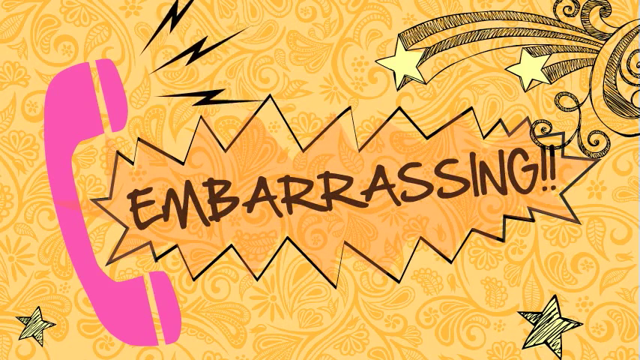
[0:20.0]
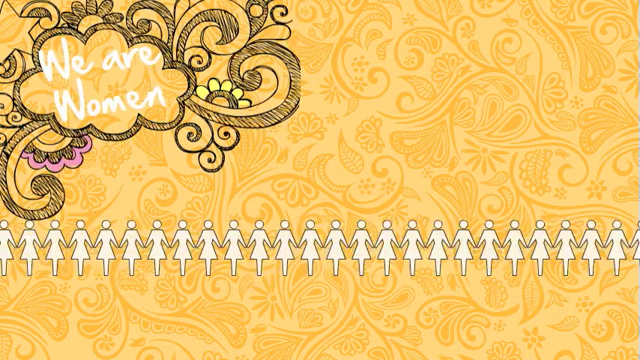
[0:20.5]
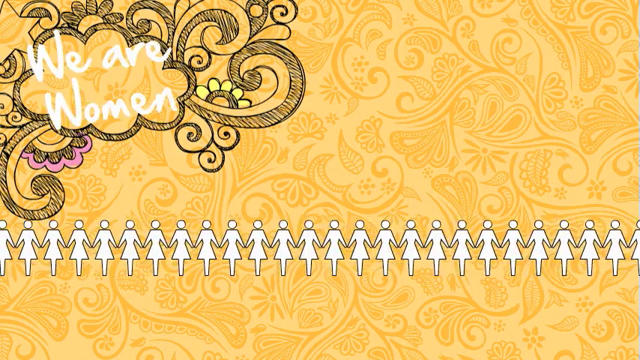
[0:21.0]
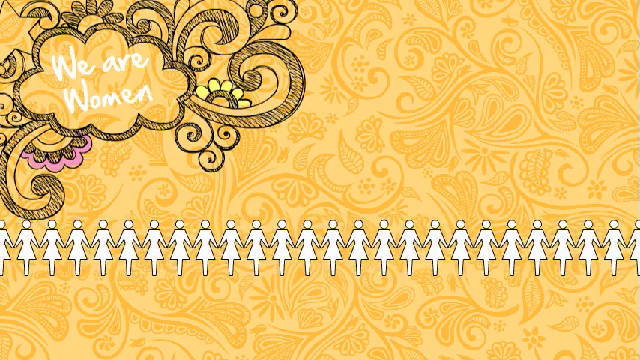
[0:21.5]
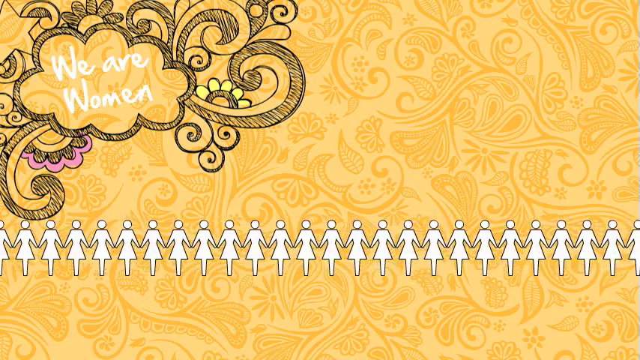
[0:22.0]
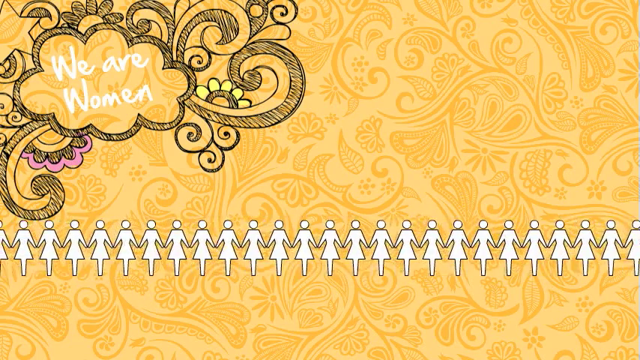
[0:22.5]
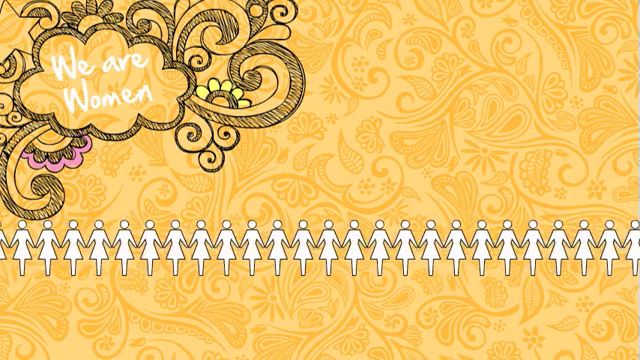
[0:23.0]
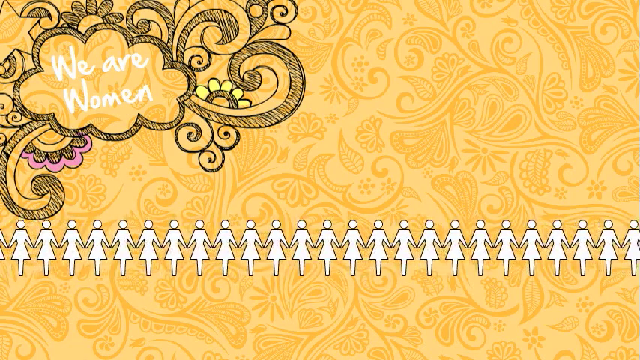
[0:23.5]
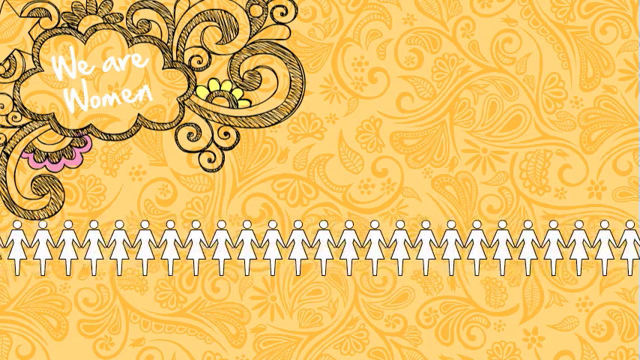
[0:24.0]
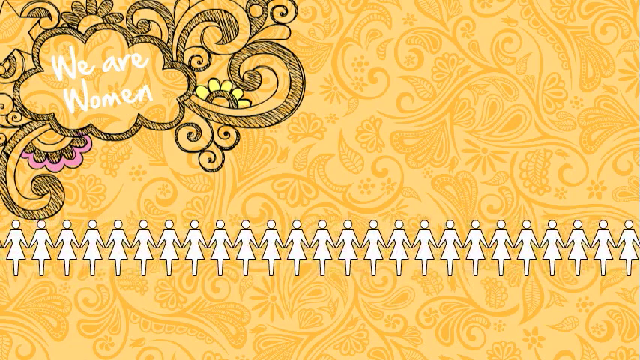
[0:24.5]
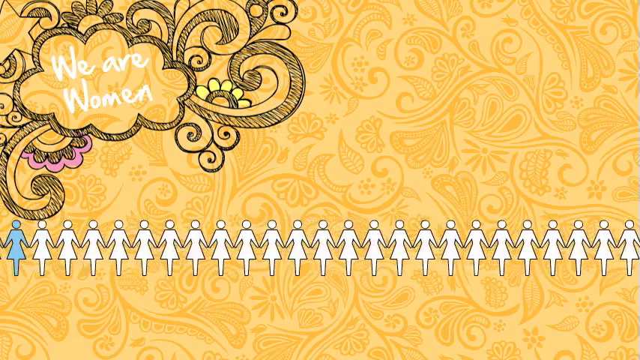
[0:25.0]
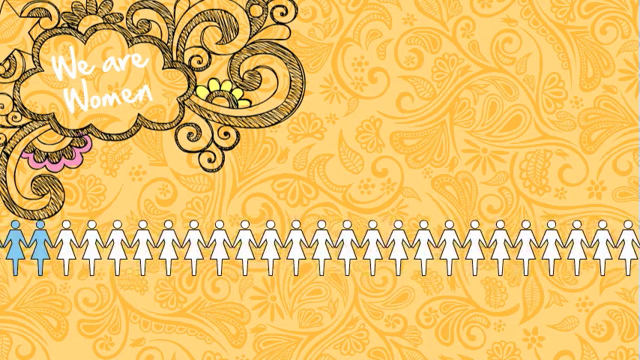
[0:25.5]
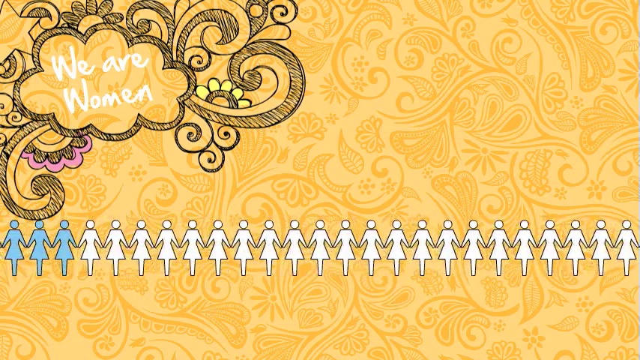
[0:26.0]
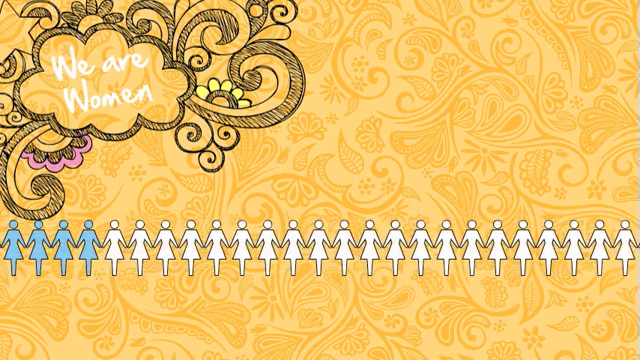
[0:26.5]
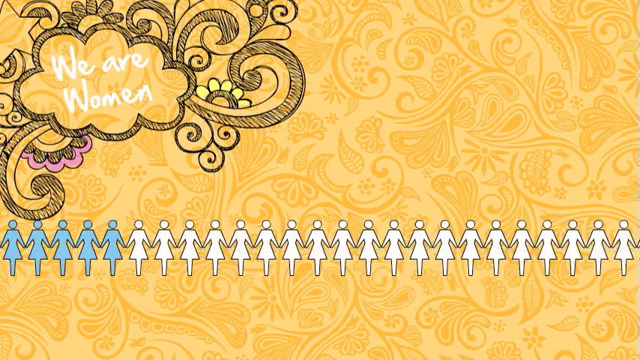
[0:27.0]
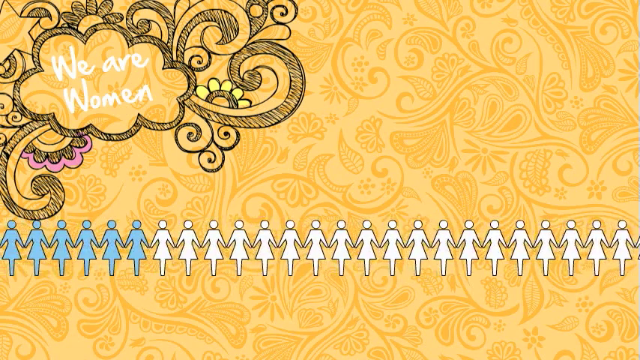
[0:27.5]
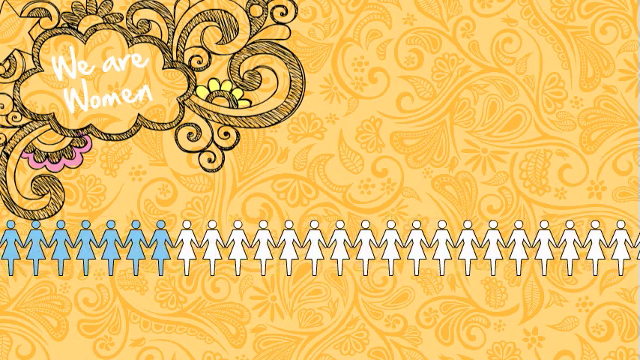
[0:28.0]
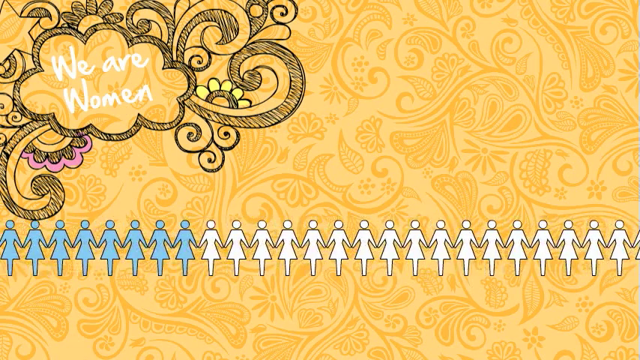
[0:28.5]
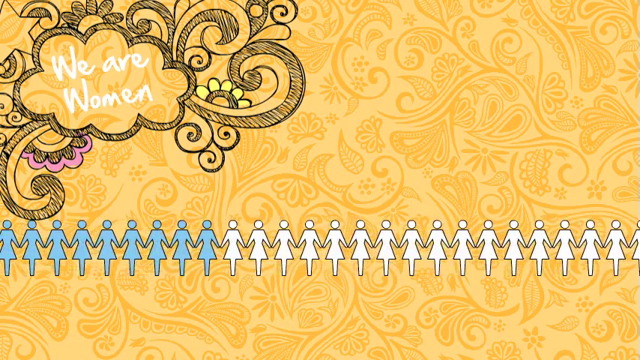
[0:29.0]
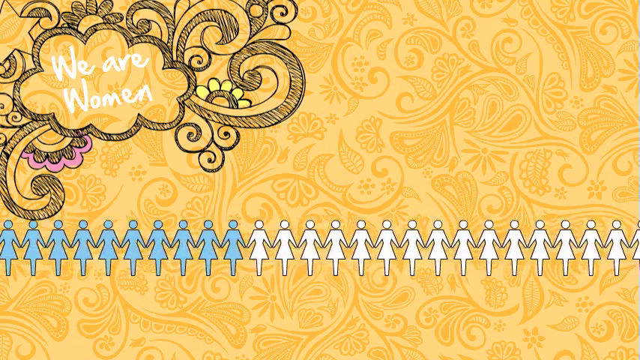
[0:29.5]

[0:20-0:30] A pink phone receiver is on the left side of the screen, with three black lightning bolts coming out of the earpiece. In the bottom left there is a heart that is sort of white on the inside, drawn with black lines. In the center is a spiky banner containing the word "embarrassing", and stars are on the right side of the screen. This disappears, and sort of a floral pattern appears in the top left with sort of a cloud in its center; in the cloud, white letters read "we are women". Then a row of animated drawings of women appears; they sort of look cut out of paper and are holding hands. They kind of look like the symbol on a women's bathroom, but with legs. The symbols start turning blue, and the blue symbols move from the left side of the screen to the right.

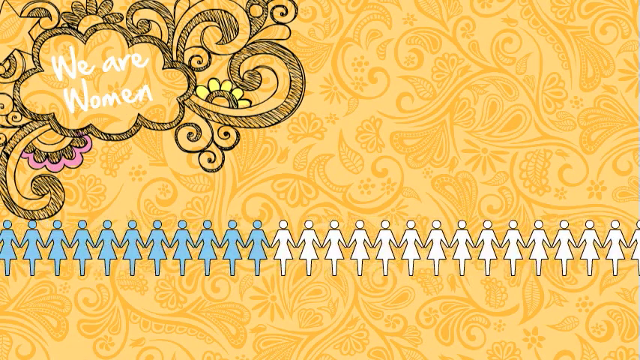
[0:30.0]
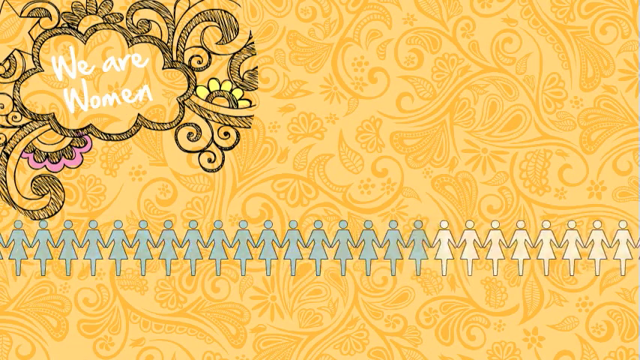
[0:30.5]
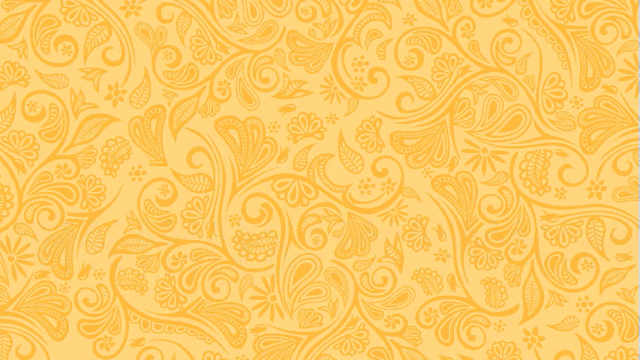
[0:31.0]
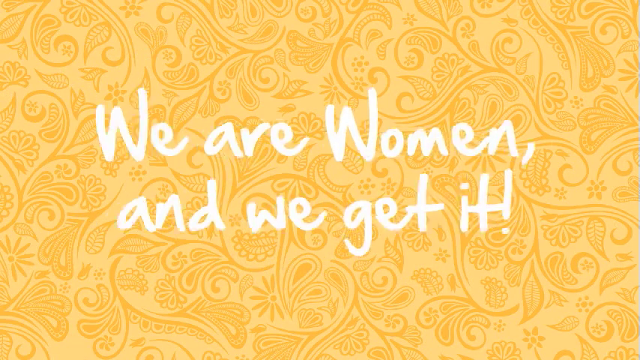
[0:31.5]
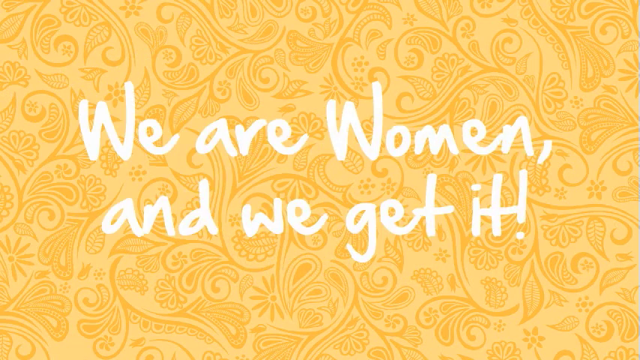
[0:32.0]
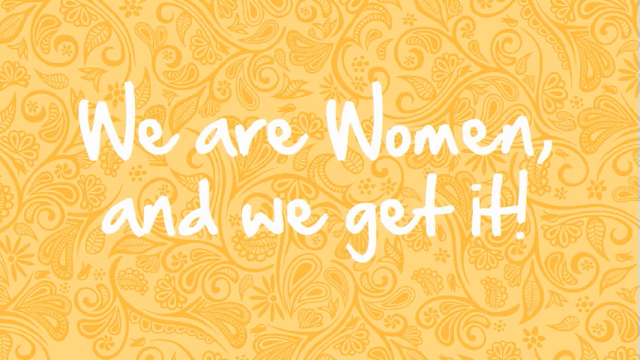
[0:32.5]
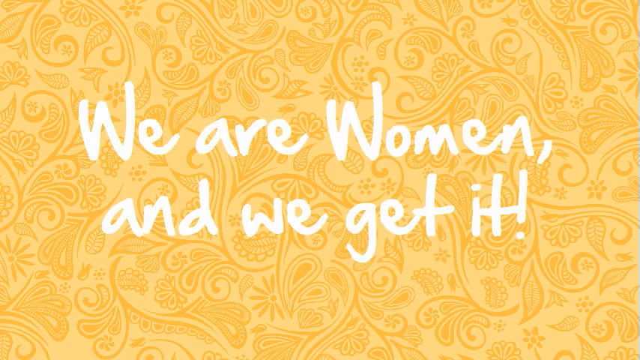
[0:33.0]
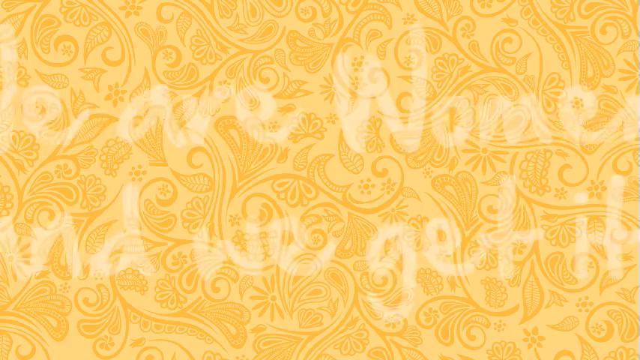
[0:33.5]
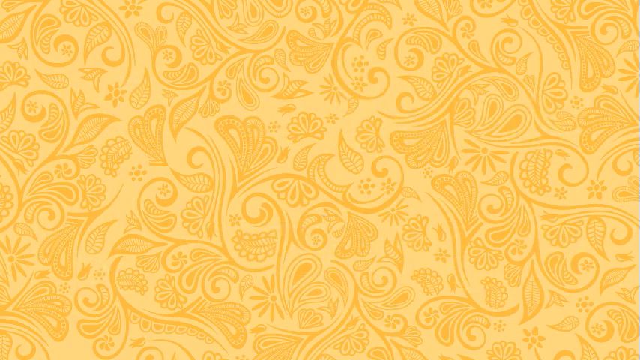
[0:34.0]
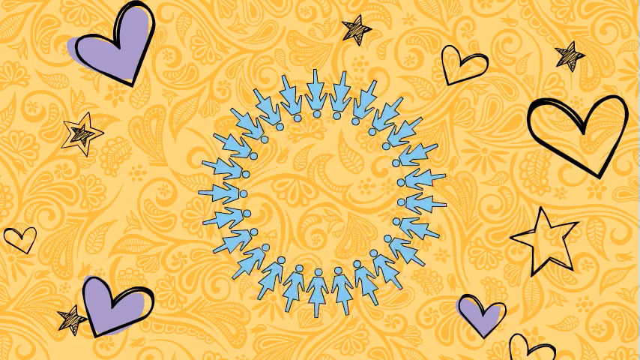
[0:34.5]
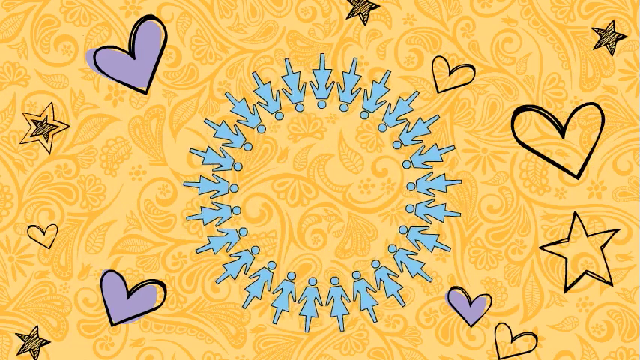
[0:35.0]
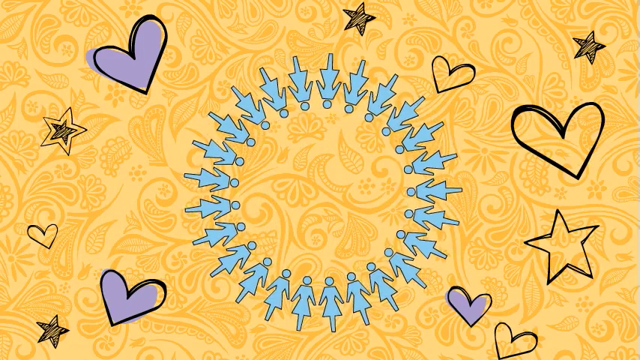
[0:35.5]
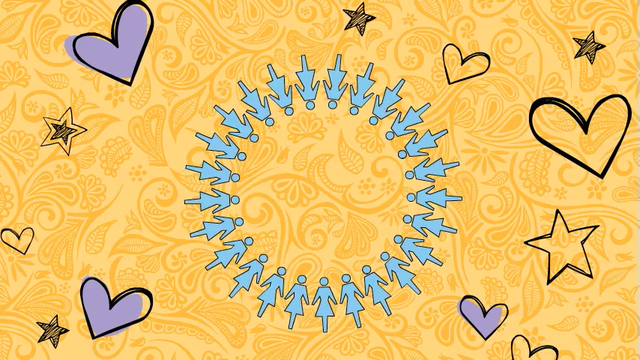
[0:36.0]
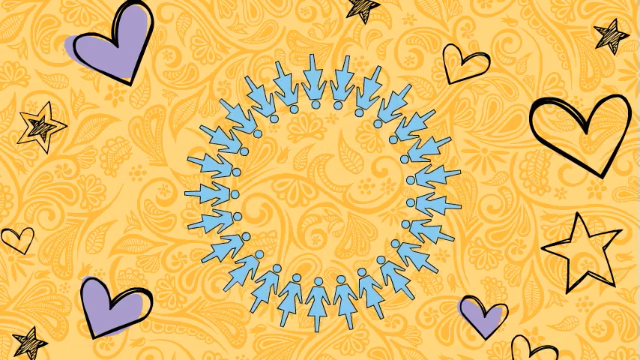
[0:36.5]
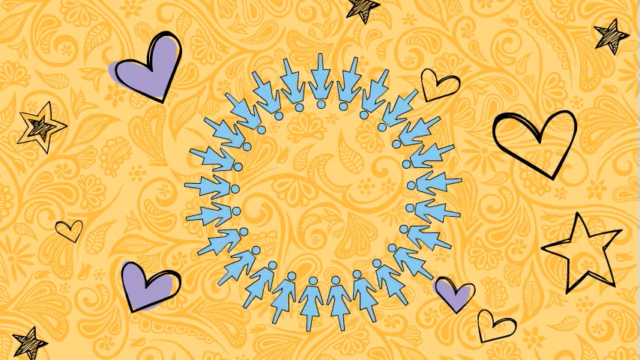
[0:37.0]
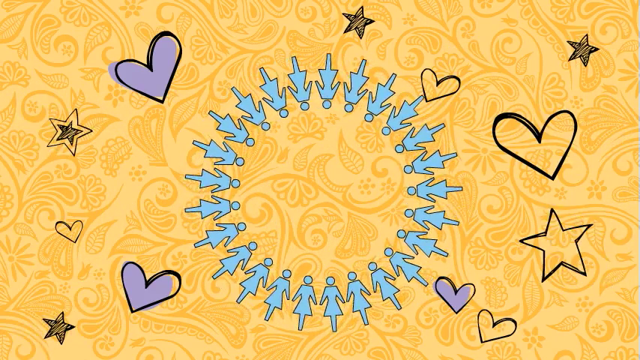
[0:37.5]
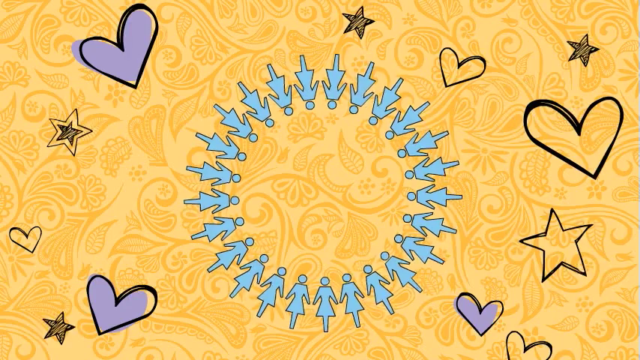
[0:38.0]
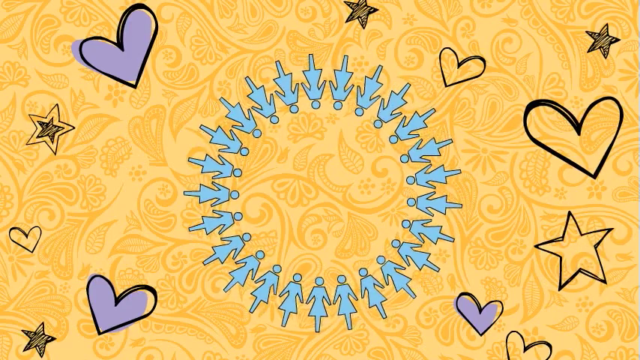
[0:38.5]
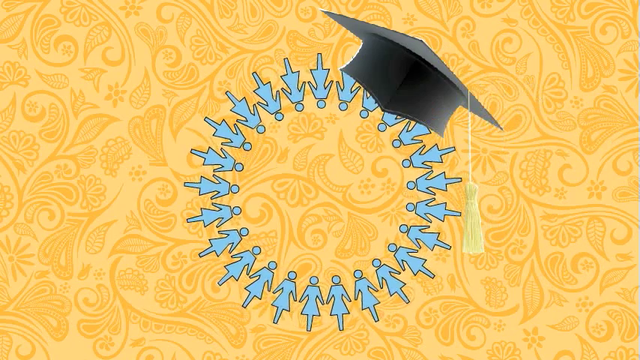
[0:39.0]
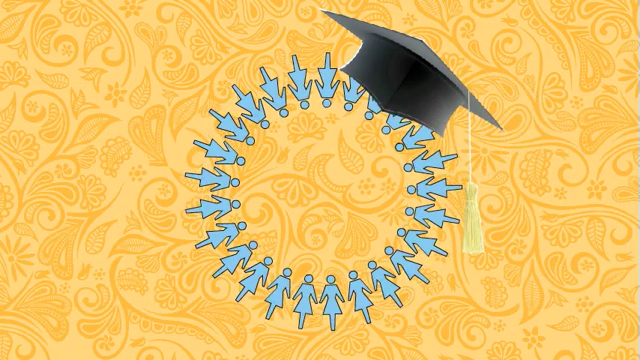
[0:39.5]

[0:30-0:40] The screen has a yellow-black background with darker yellow colors forming a pattern, sort of like vines with leaves and flowers. In the top left there is more of this pattern with a cloud in the middle, all sort of dark, as if drawn in dark pencil or something. In the cloud, white letters read "we are women". Around the bottom middle of the screen, a number of animated drawings of women symbols, like the symbols on a women's bathroom, move from the left side of the screen to the right. They disappear, and white letters on the screen read "we are women and we got it". Purple hearts appear on the left and right sides of the screen, along with some colored-in five-pointed stars. In the center, more of the blue women symbols hold hands and form a circle, their heads pointing toward the inside of the circle and their feet toward the outside. The stars and hearts move in and out. Then a graduation cap with a yellow tassel appears at the top right of the circle the women form.